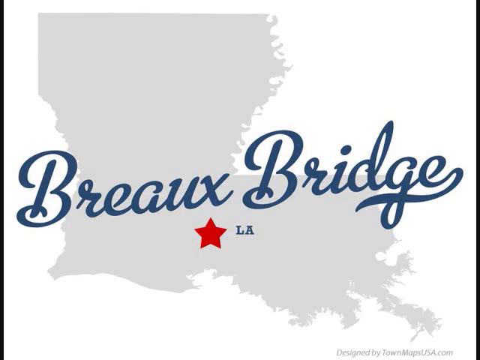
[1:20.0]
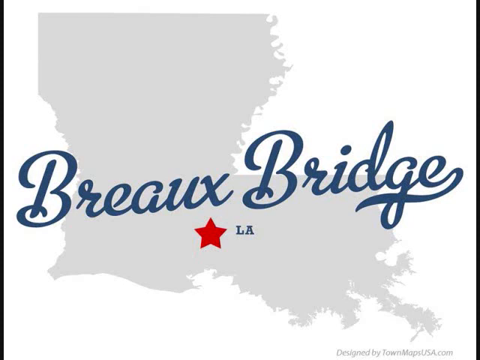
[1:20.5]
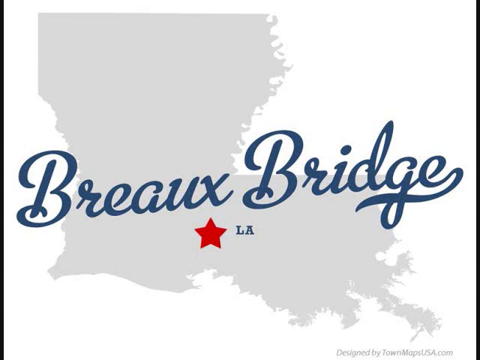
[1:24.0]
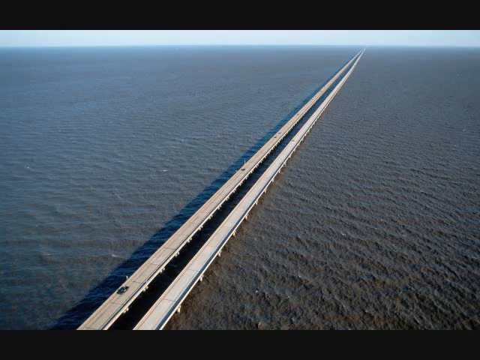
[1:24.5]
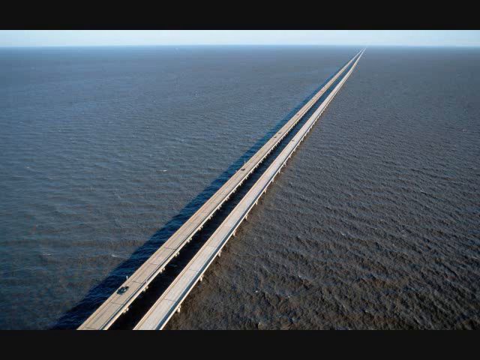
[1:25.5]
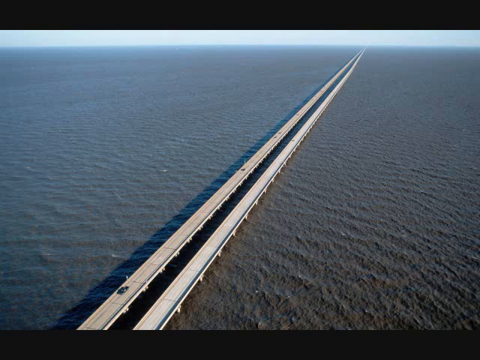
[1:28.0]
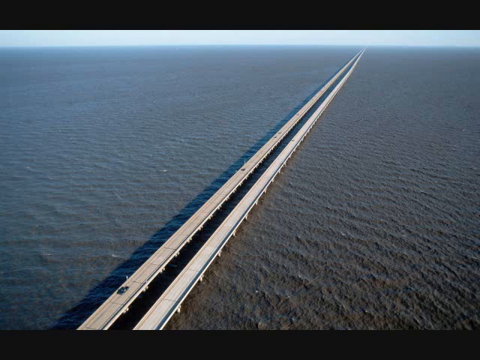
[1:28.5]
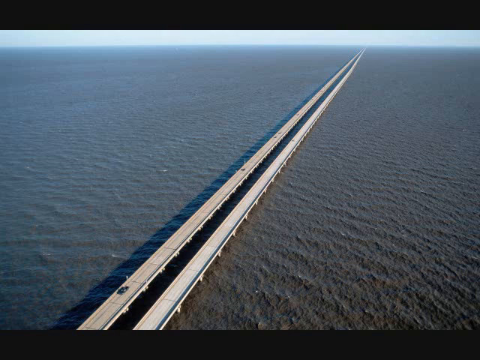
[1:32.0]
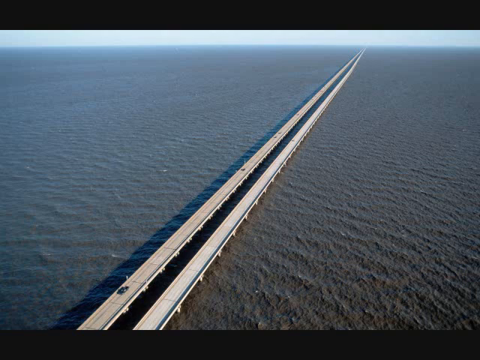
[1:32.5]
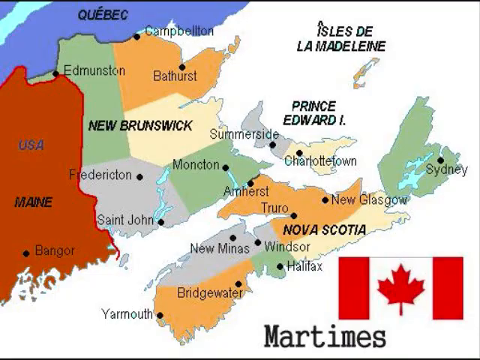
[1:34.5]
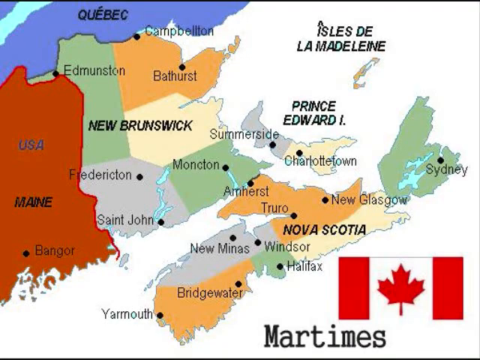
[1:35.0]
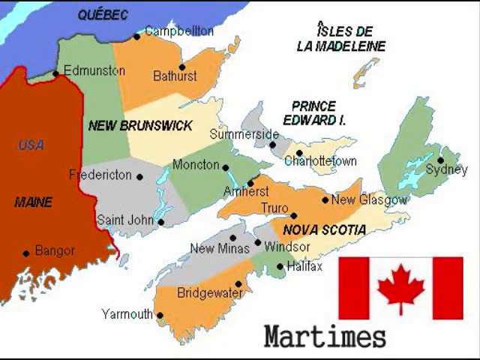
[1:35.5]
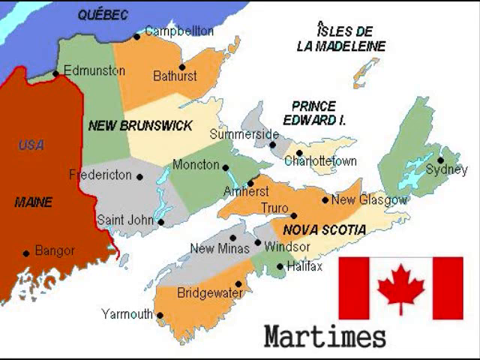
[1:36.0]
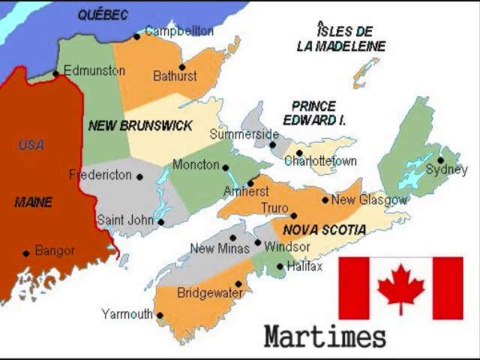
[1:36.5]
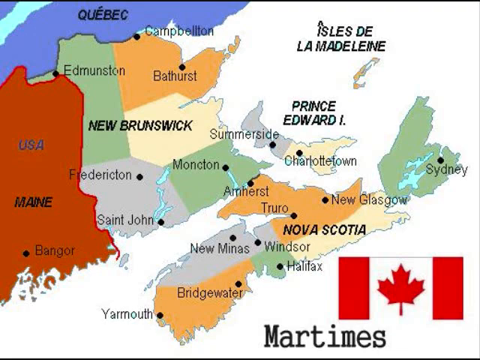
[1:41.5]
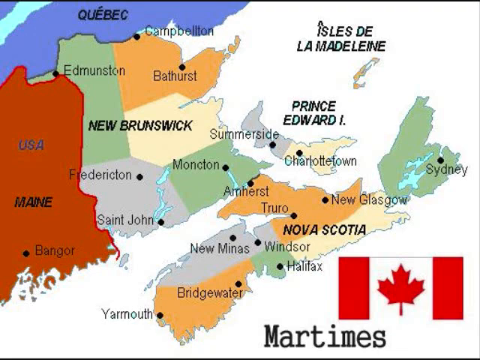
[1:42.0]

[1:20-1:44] An outline of Louisiana appears with a star that apparently represents the capital, and "Biloxi Bridge" is written next to the star. Then the actual bridge is shown: it looks like two parallel bridges running across water, surrounded by water on pretty much all sides, and it looks like it runs for maybe 30 to 40 miles. Next comes another map that kind of looks like a map of maybe Canada. The state of Maine can be seen, with the words "in the U.S.", and Quebec and New Brunswick are on the map, along with a Canadian flag. Several towns are marked: Sydney, New Glasgow and Bridgewater. The wording "Prince Edward I" appears. Each region on the map has its own color: New Brunswick is kind of a mix between green and beige, and Bridgewater is kind of a gray color.